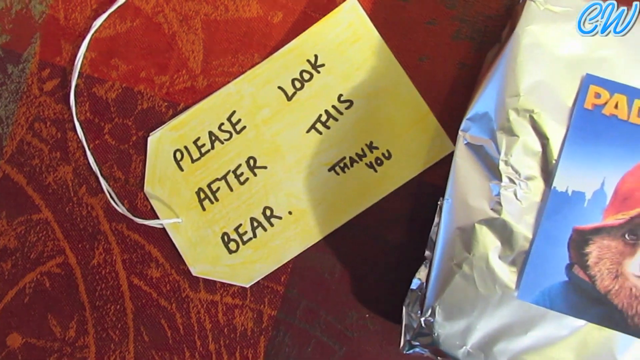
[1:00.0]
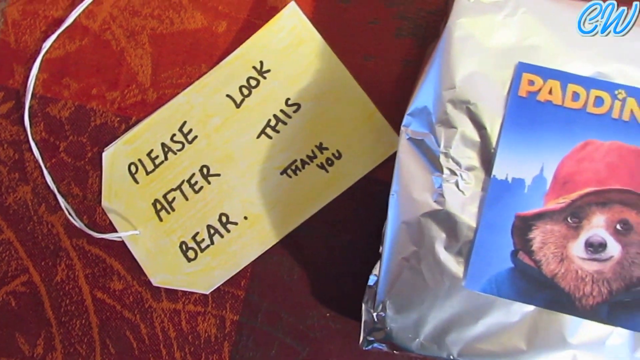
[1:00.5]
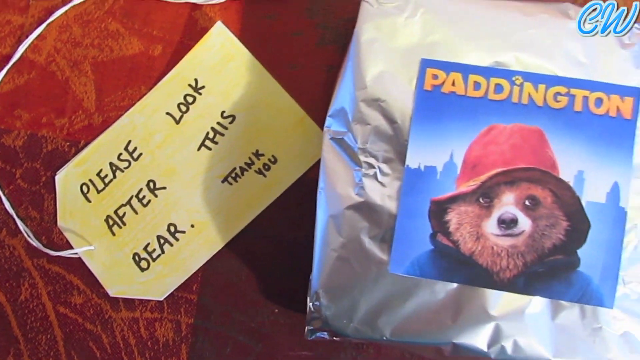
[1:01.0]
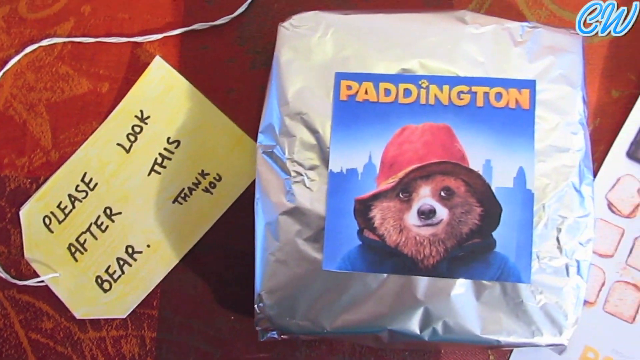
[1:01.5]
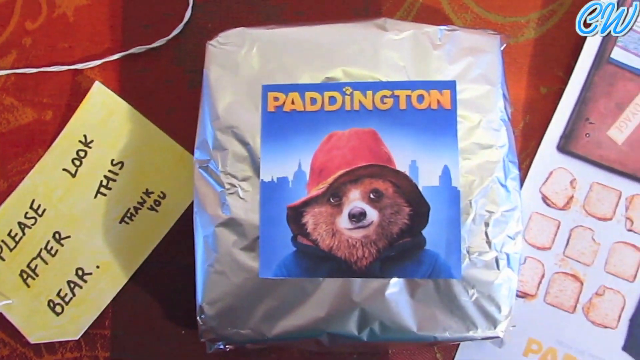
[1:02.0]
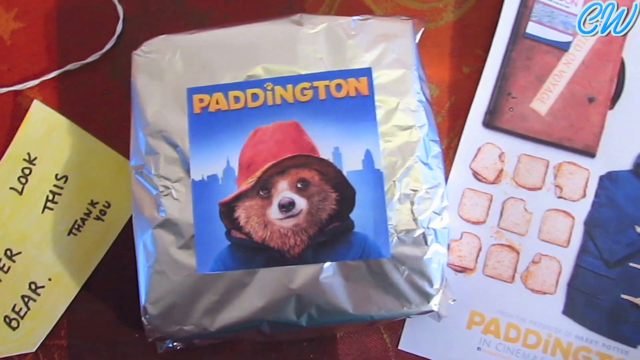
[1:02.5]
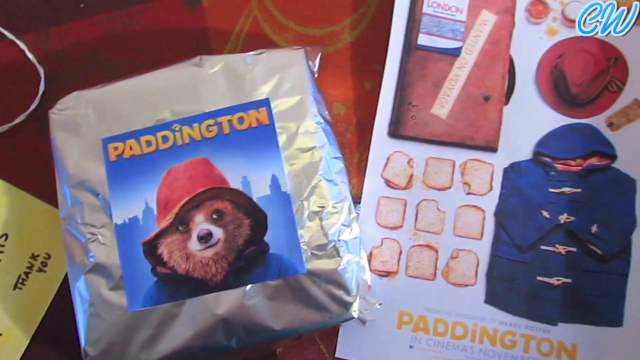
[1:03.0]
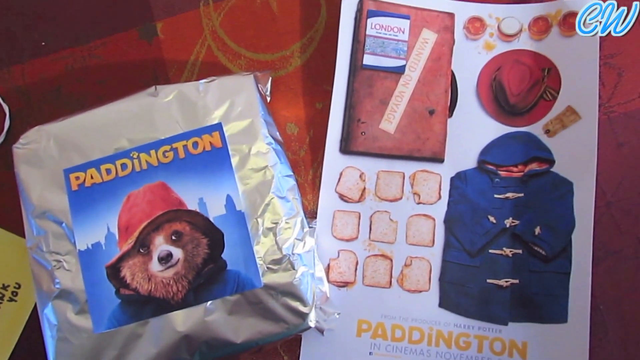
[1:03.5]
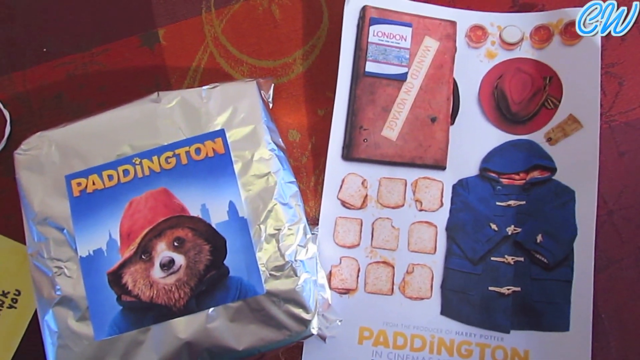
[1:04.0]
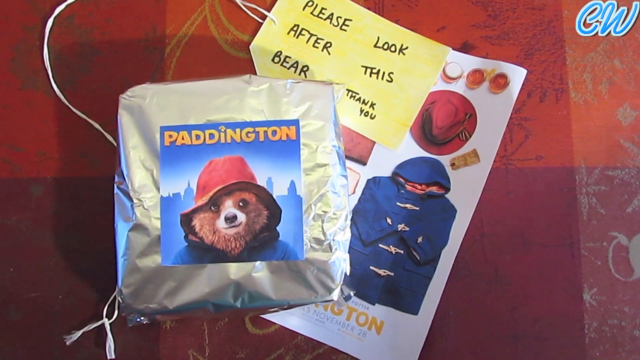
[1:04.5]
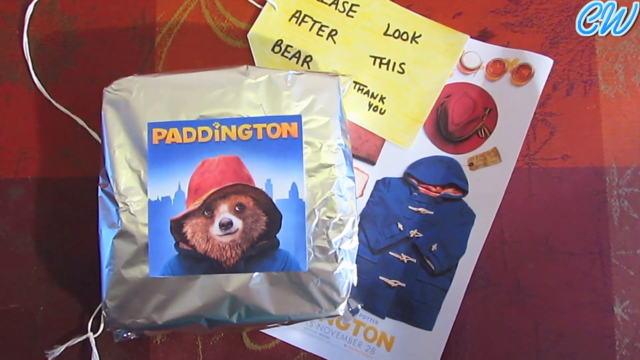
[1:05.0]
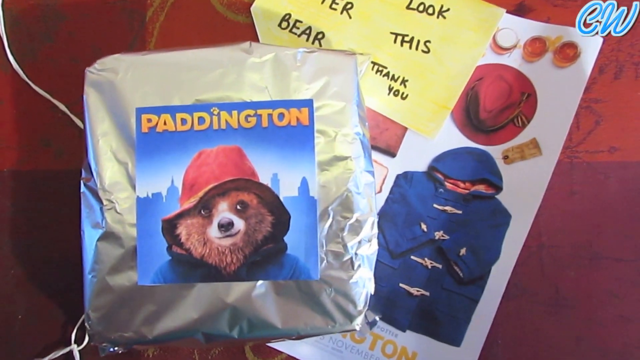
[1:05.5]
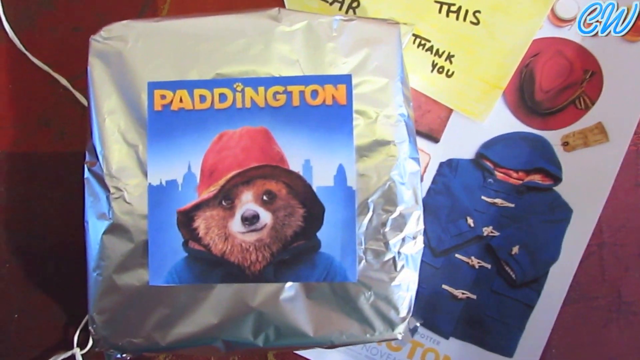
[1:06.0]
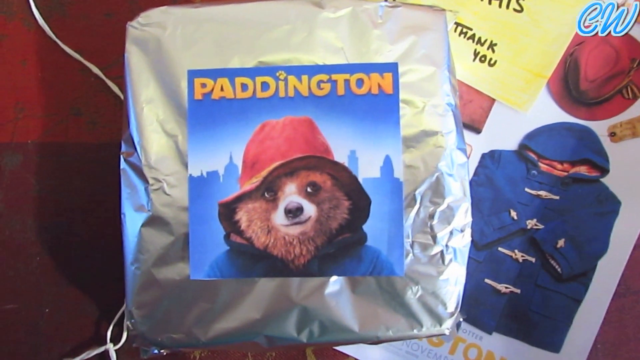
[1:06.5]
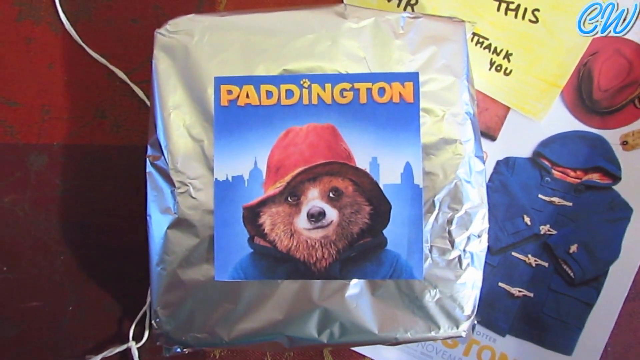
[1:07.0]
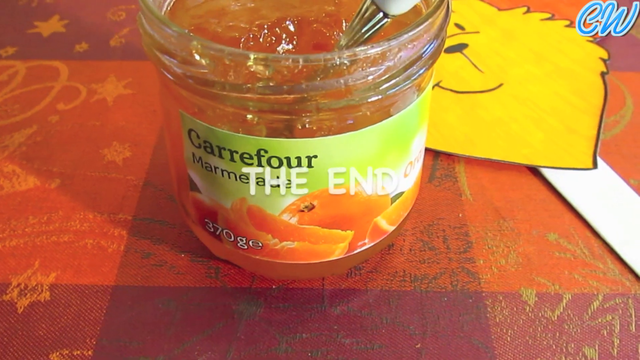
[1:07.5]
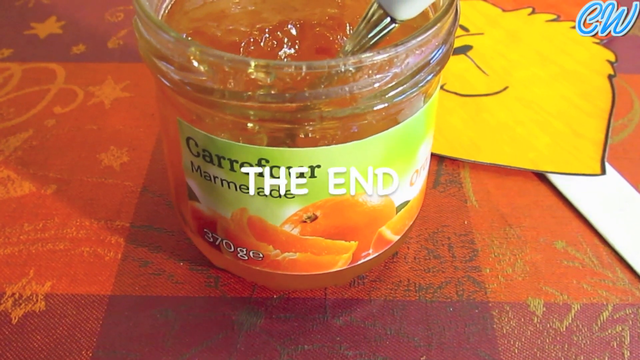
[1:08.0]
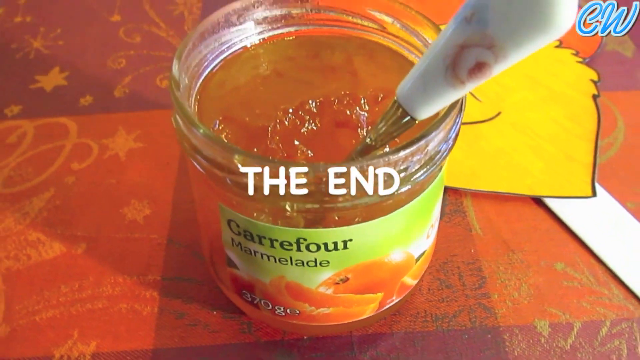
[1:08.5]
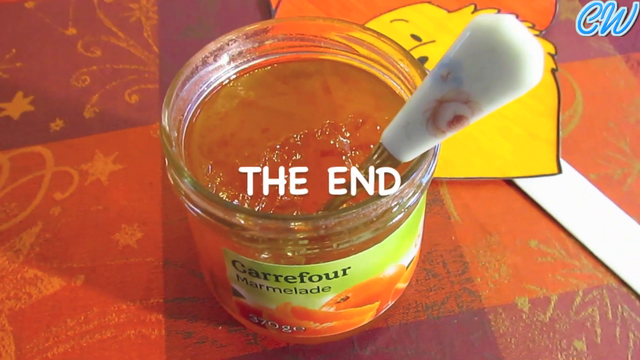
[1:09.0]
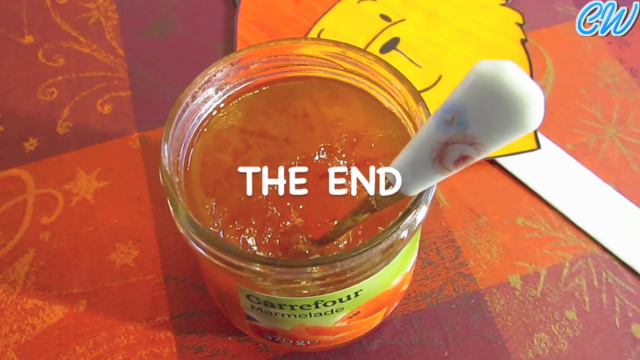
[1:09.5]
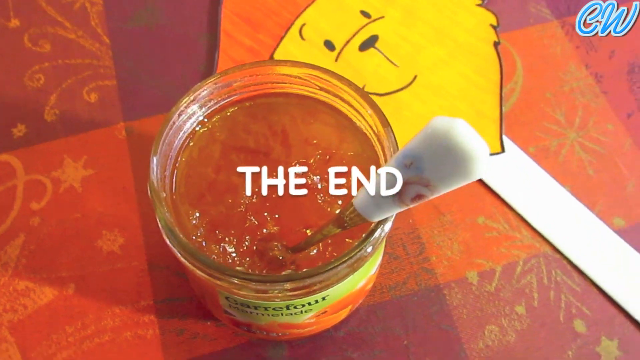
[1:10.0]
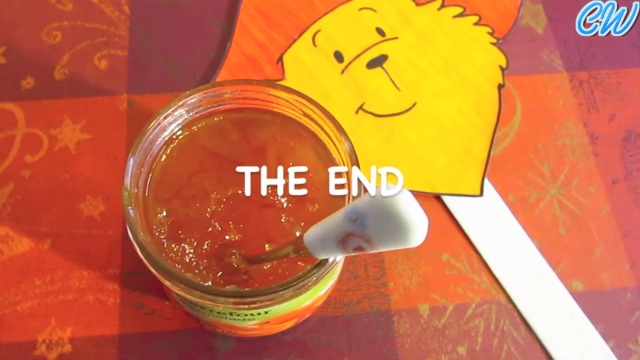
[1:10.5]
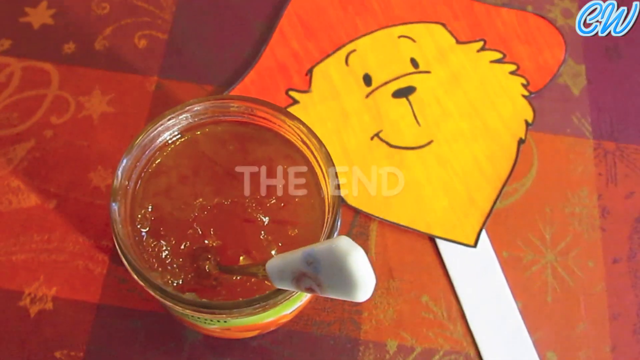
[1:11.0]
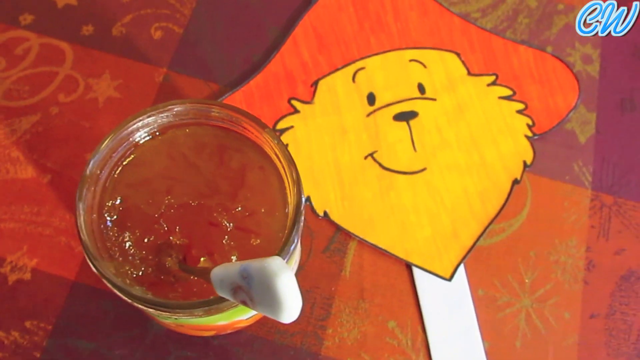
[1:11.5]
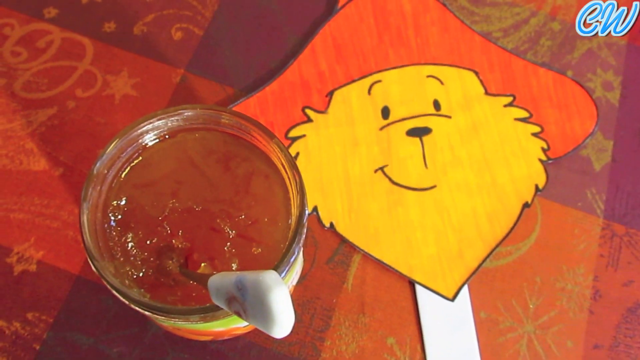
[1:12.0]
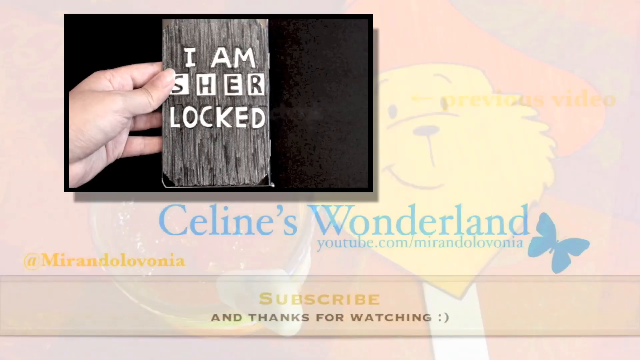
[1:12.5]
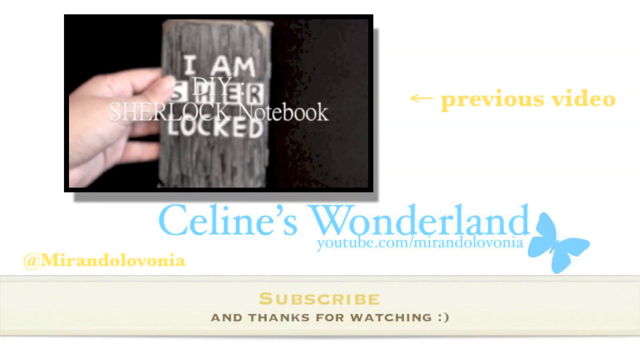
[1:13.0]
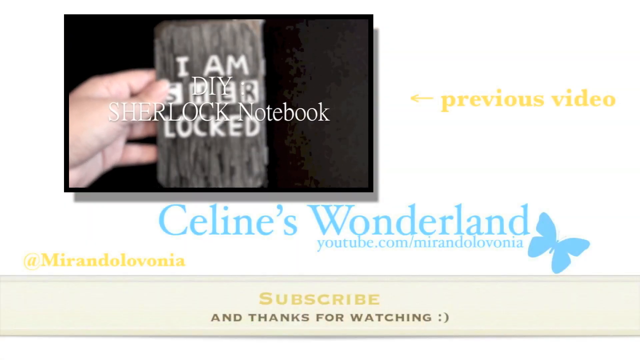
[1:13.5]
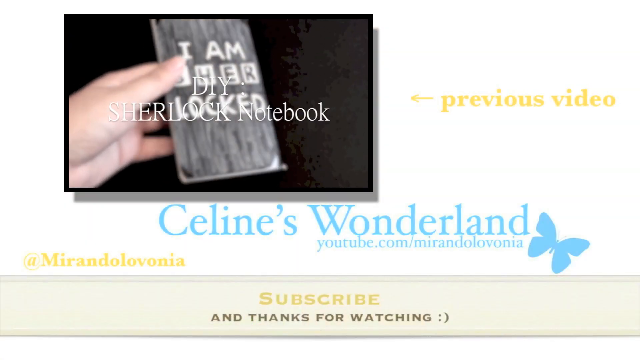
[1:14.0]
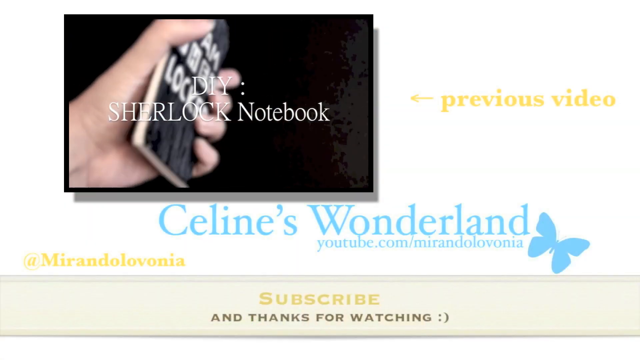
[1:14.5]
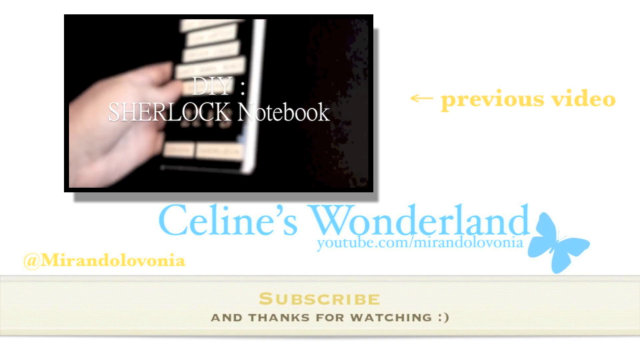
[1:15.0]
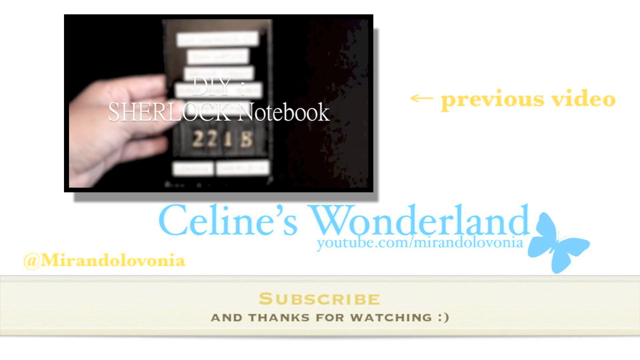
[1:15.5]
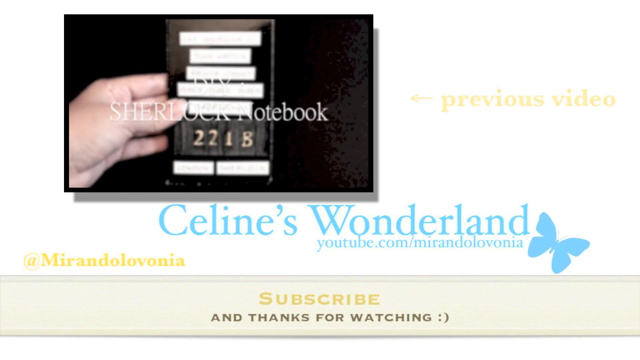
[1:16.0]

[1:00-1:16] A square sandwich is wrapped up inside tinfoil, with a sticker on top that says "Paddington" and shows a bear avatar wearing human clothes. Next to the sandwich is a post-it note that states "please look after this bear, thank you." The sandwich is set on top of a red tablecloth and has a rectangular piece of paper with printed images on top of it. The camera transitions to a jar of marmalade, also sitting on the table; the jar is open and has a spoon stuck in so that only the handle is showing. A paper cutout glued on top of a wooden stick shows another version of the bear, this one with golden fur and a simpler face. These objects are on a table with an autumn-themed tablecloth.